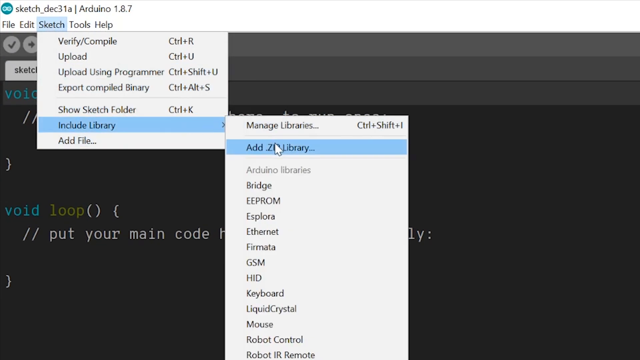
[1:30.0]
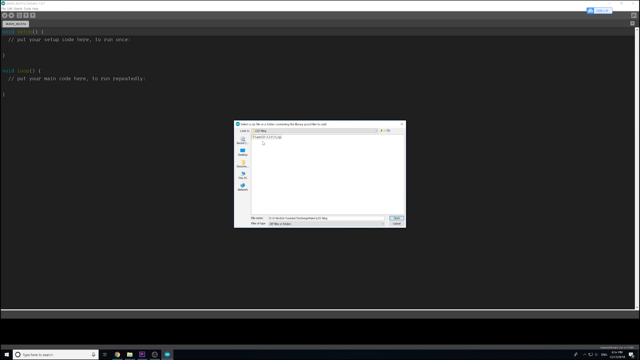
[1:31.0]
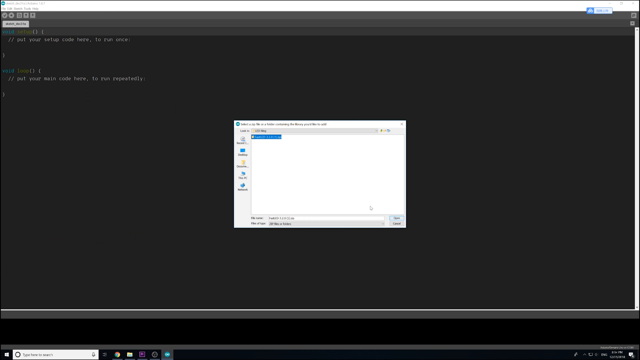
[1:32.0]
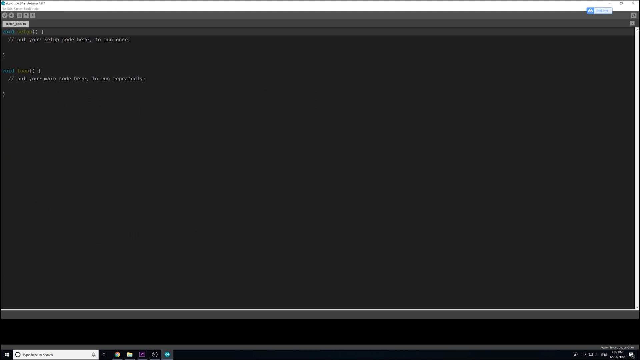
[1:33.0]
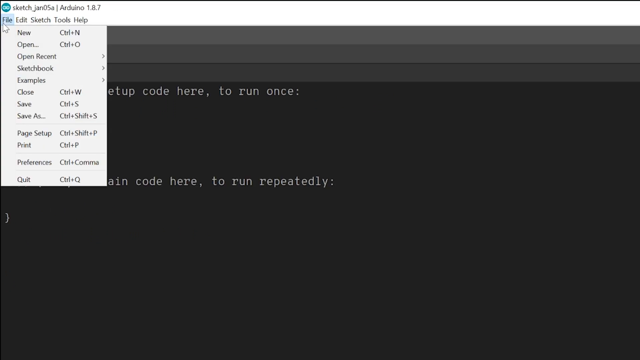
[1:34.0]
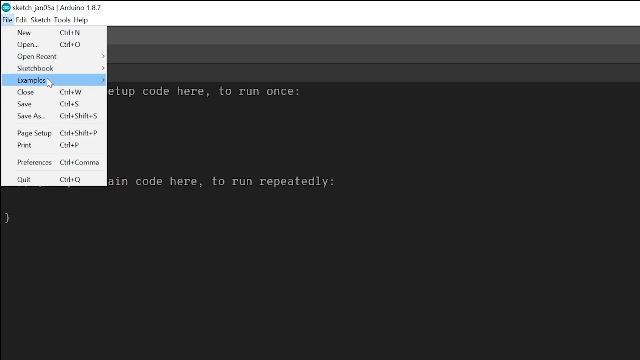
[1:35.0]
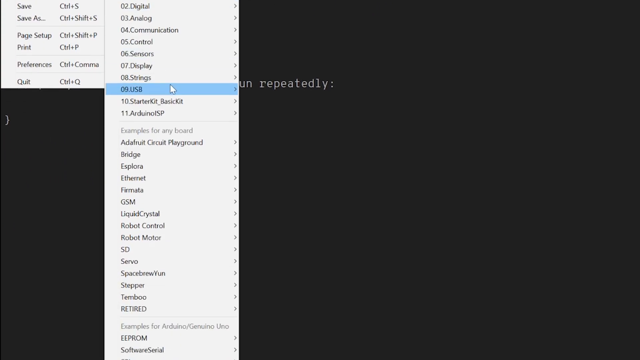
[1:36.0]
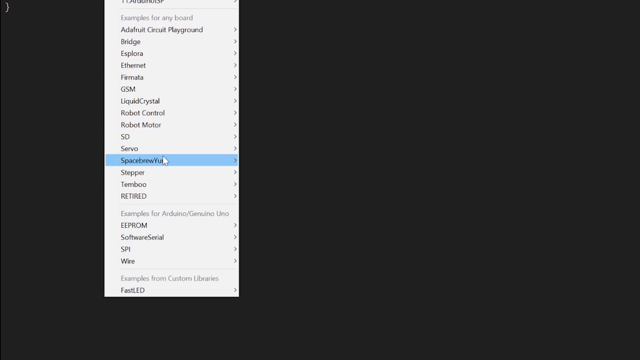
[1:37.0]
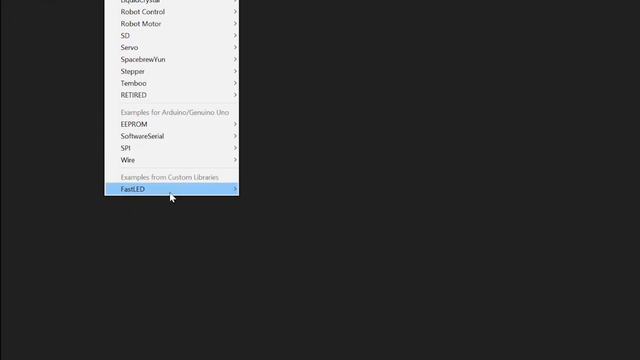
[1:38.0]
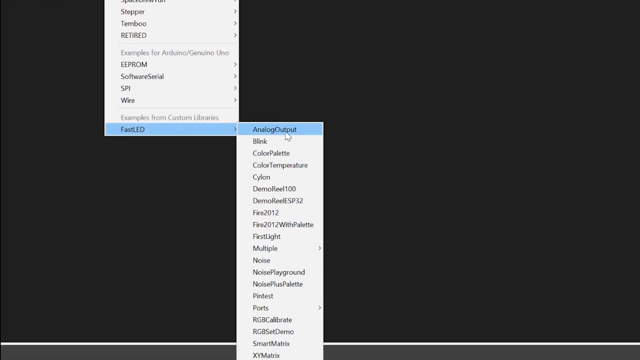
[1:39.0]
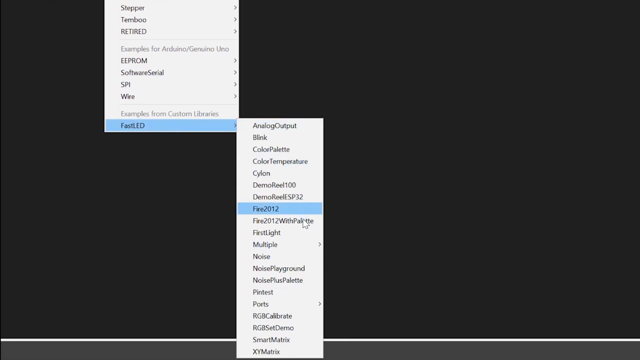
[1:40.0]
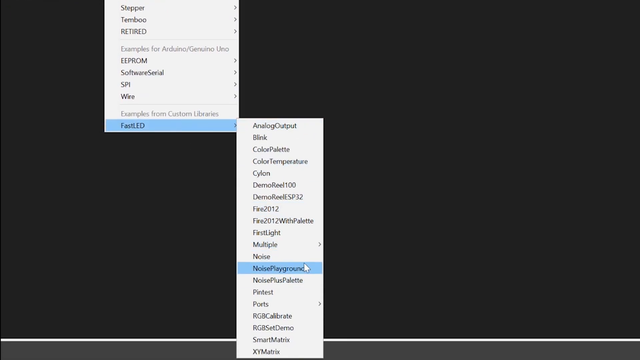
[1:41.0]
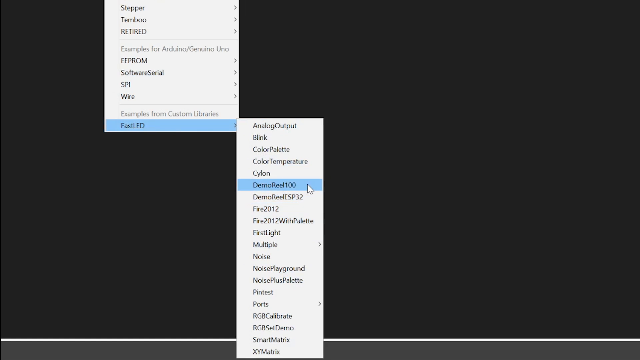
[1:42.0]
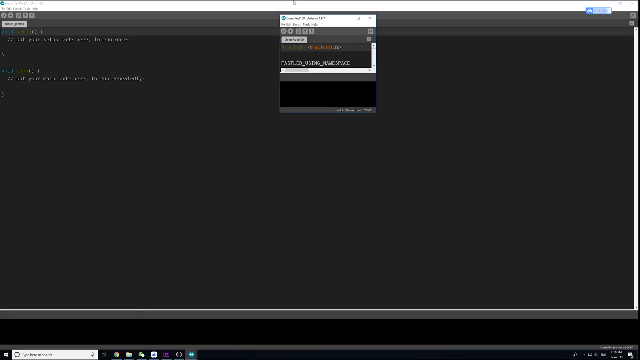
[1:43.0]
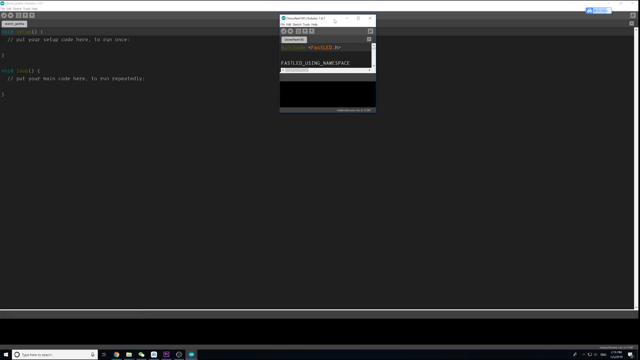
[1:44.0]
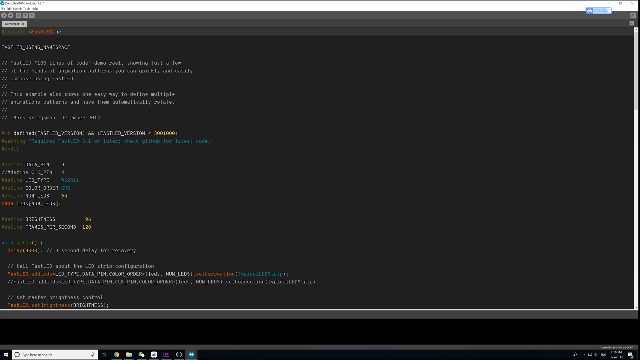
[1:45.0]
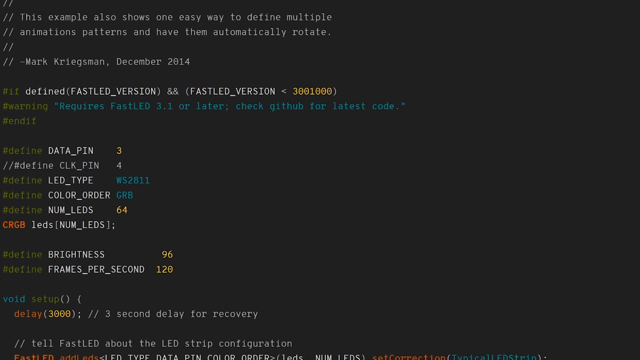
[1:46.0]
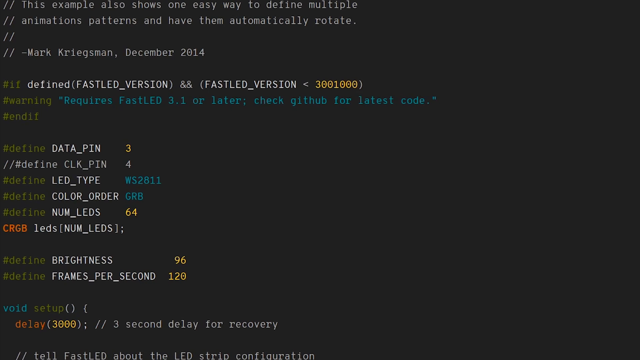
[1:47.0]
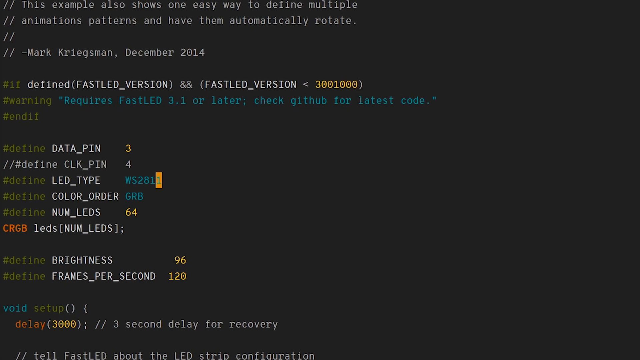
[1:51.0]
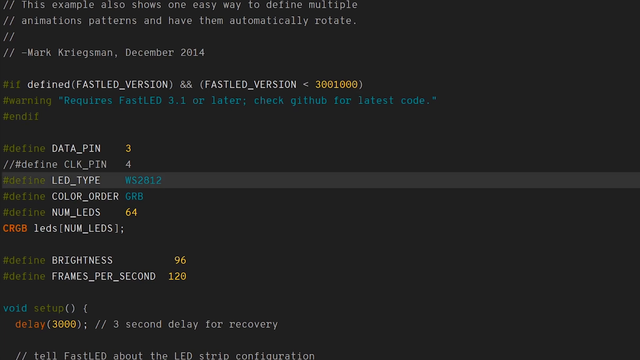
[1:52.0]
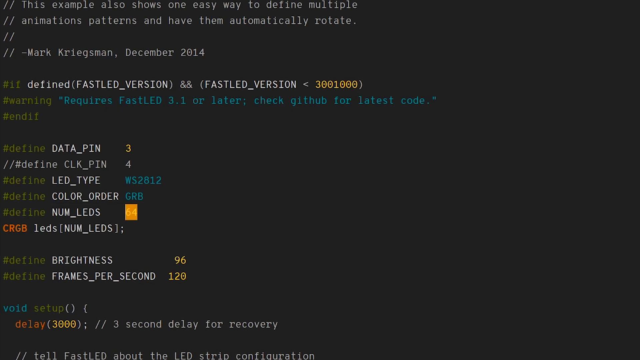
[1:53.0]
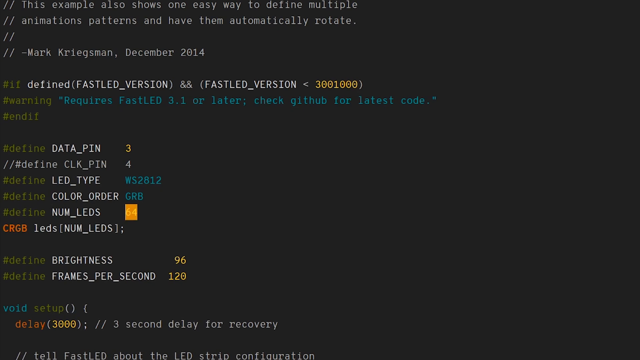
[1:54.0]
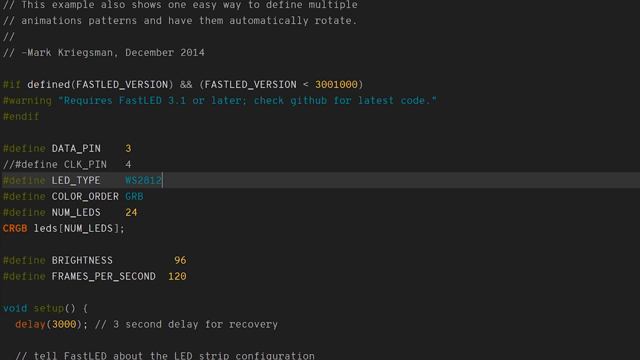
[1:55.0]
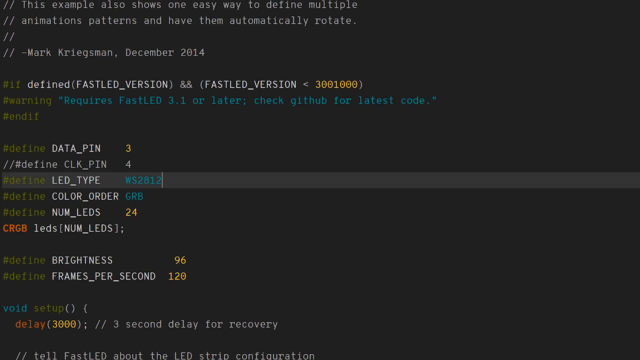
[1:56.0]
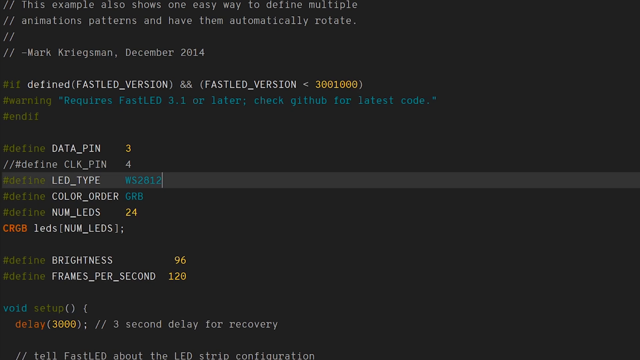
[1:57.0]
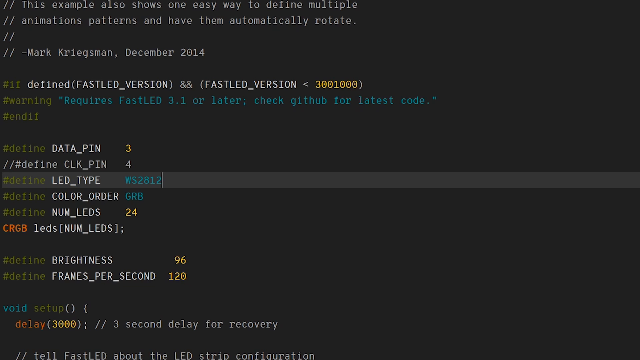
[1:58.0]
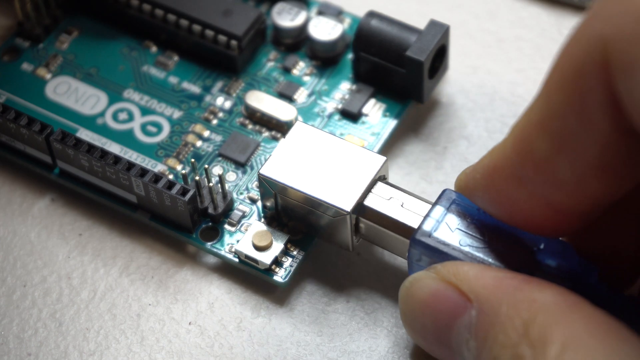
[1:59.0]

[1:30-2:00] The terminal shows the two empty functions, void setup and void loop. He clicks the sketch menu on the top white panel, then include library, which opens another menu, and clicks add zip library. A menu appears in the middle over the terminal background, prompting him to select a directory to save the file to. Back in a close-up of the terminal showing the code, he selects file to bring down a drop-down, then selects examples, which opens a drop-down of templates. He scrolls down to the template labeled "FastLED," clicks it, and from another drop-down menu selects demo reel. The terminal is now populated with constants and a function at the bottom on a black background. The video zooms in to the constants, which are initialized with #define, and the led_type color and num_leds are edited.